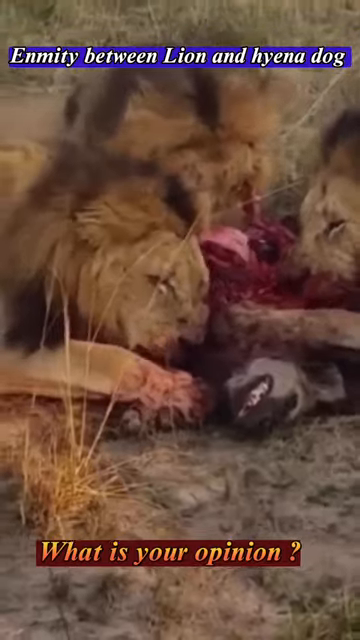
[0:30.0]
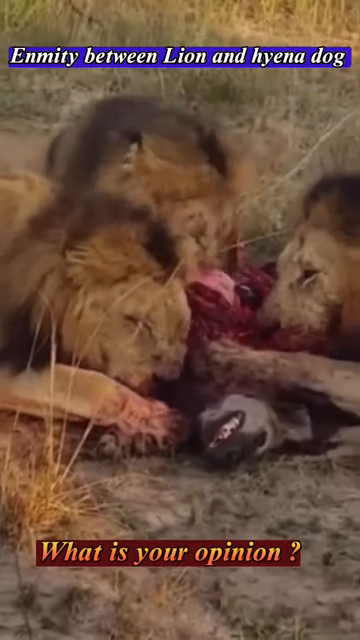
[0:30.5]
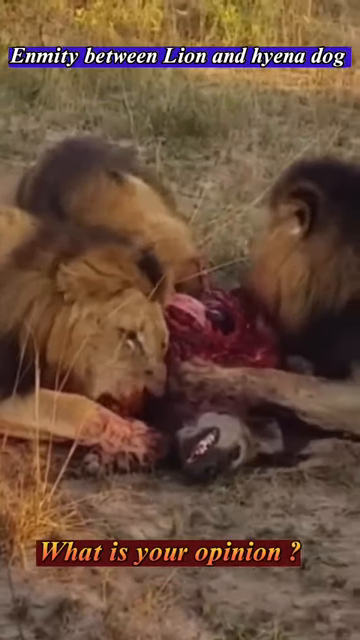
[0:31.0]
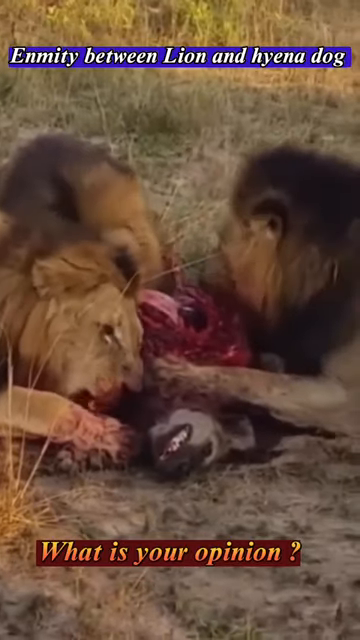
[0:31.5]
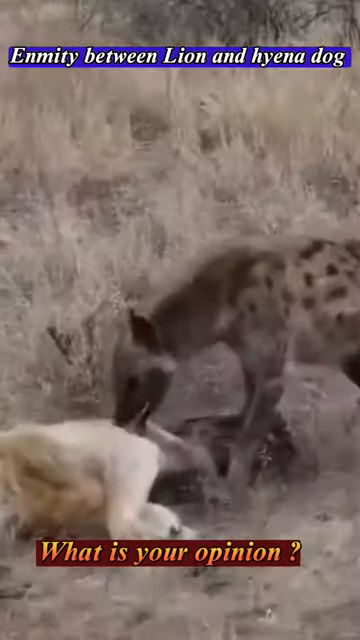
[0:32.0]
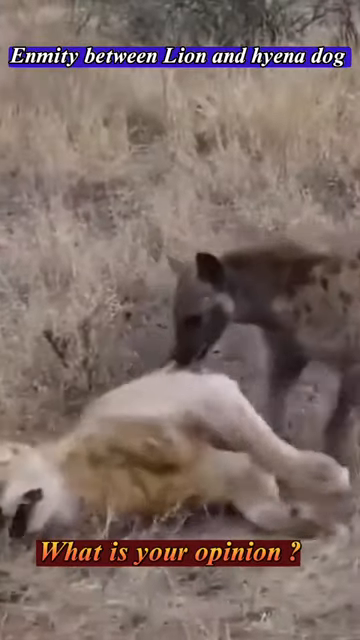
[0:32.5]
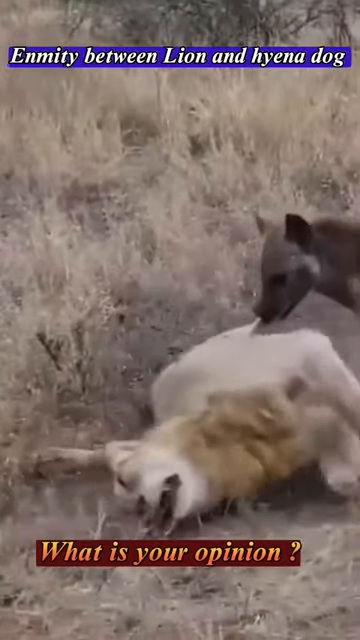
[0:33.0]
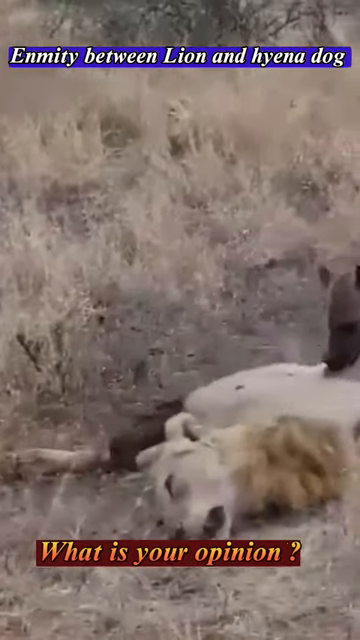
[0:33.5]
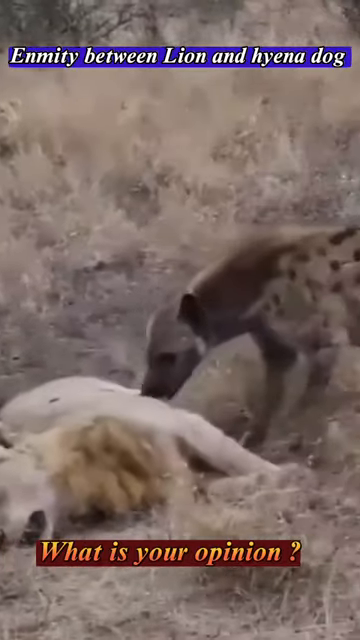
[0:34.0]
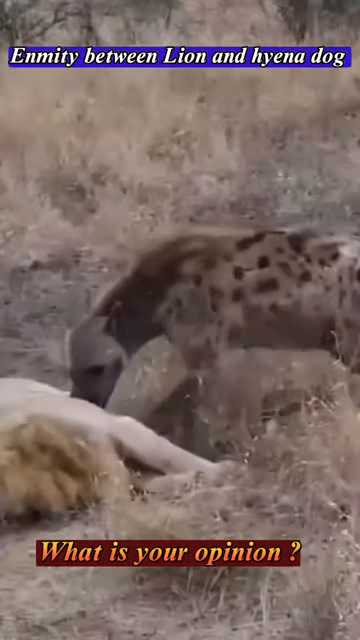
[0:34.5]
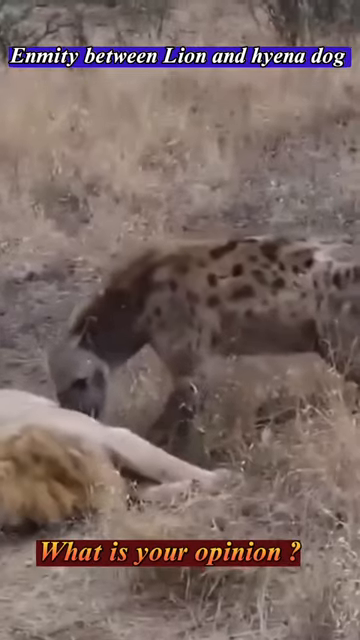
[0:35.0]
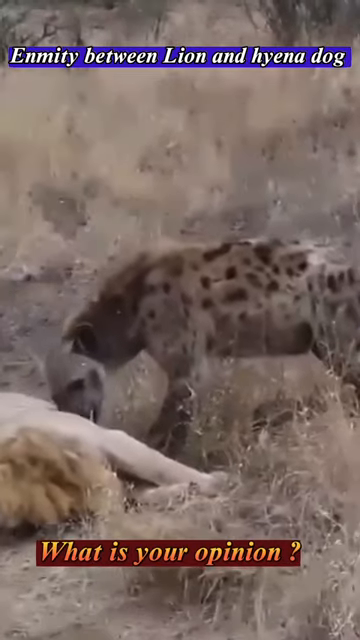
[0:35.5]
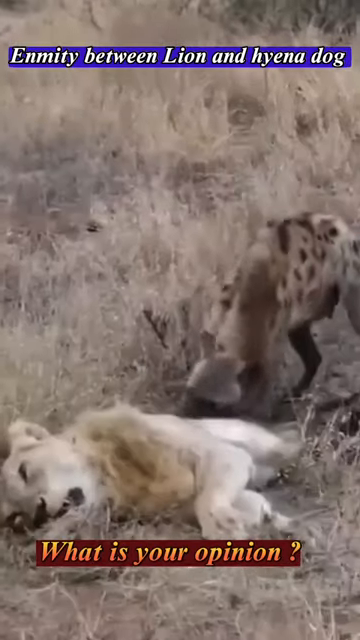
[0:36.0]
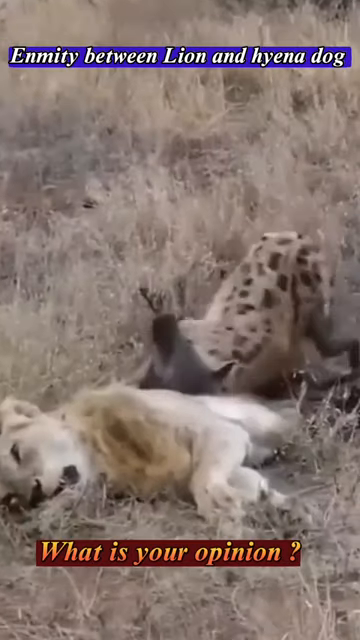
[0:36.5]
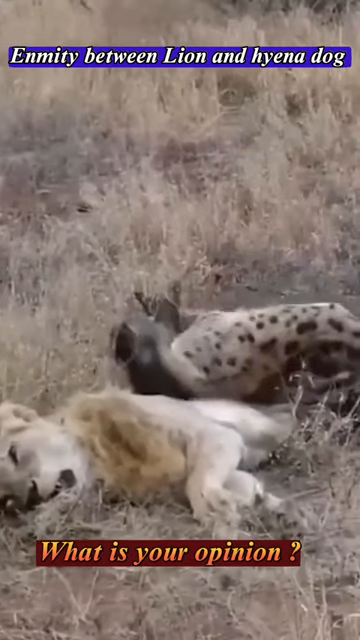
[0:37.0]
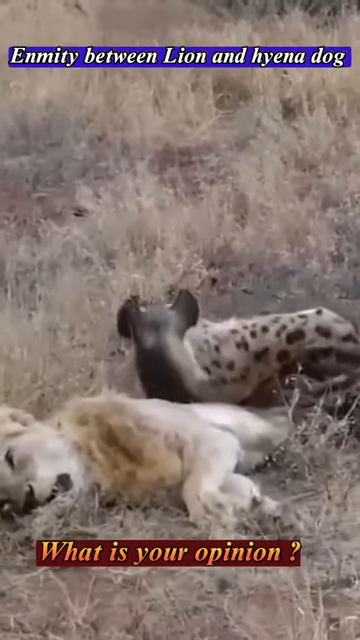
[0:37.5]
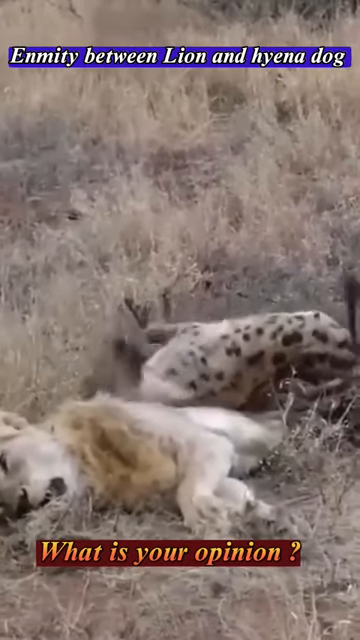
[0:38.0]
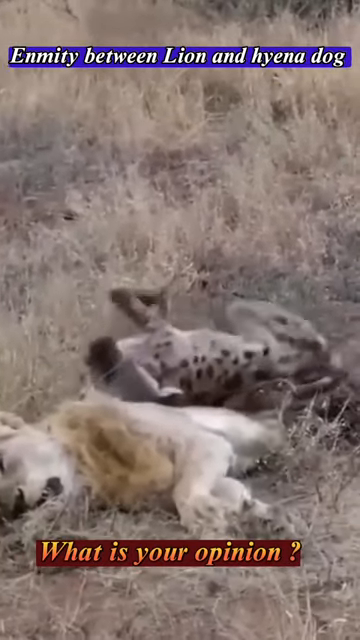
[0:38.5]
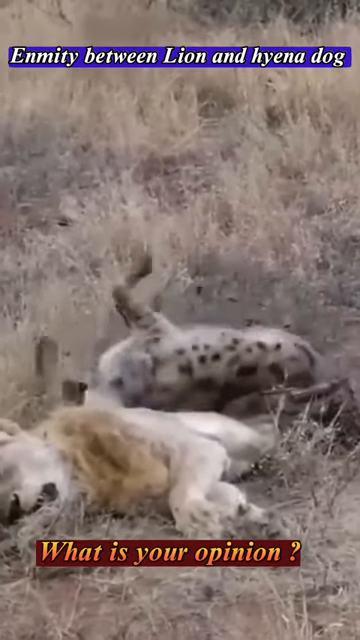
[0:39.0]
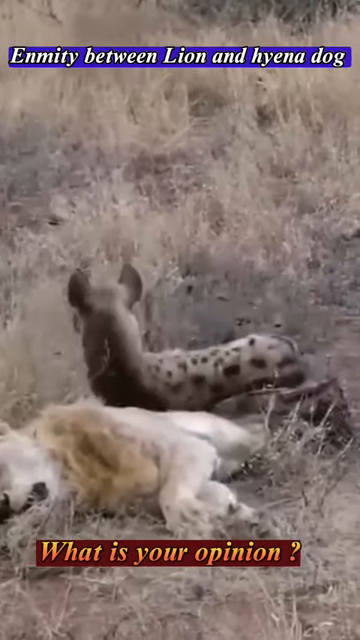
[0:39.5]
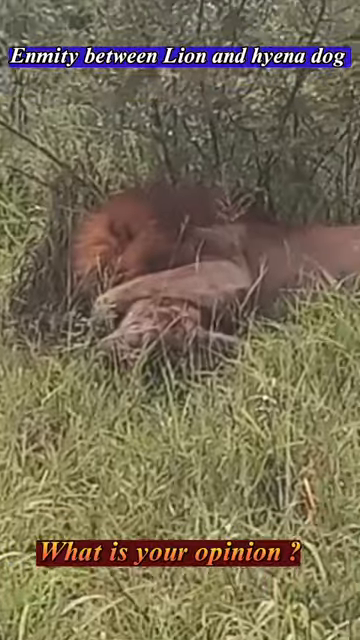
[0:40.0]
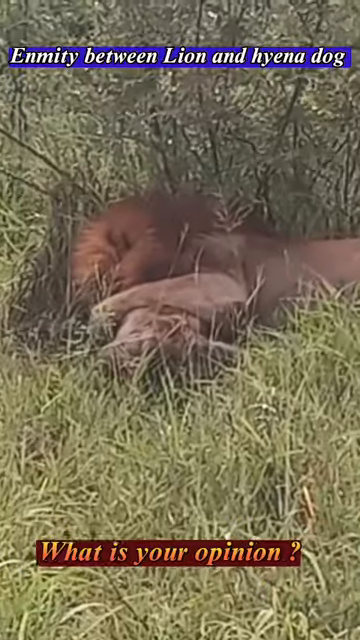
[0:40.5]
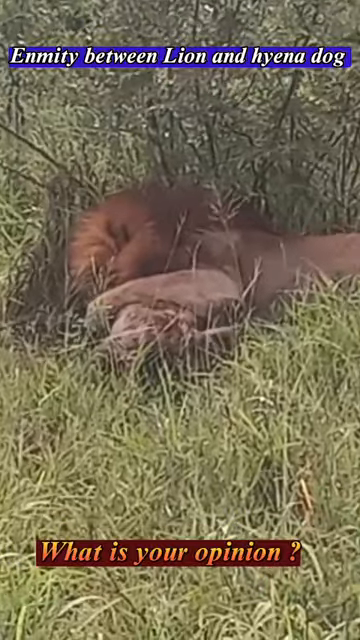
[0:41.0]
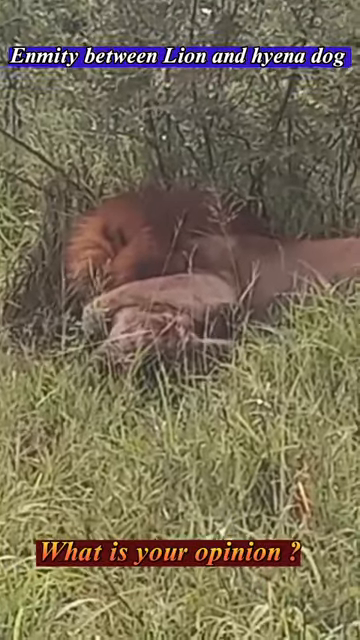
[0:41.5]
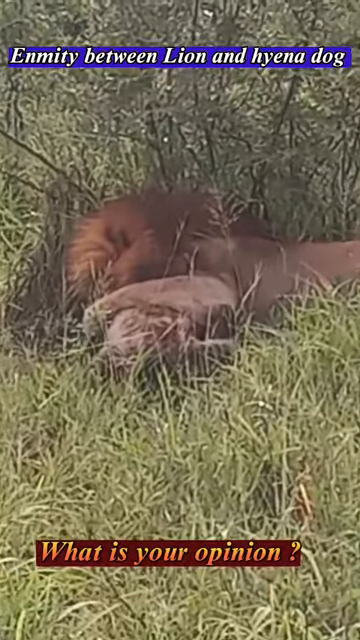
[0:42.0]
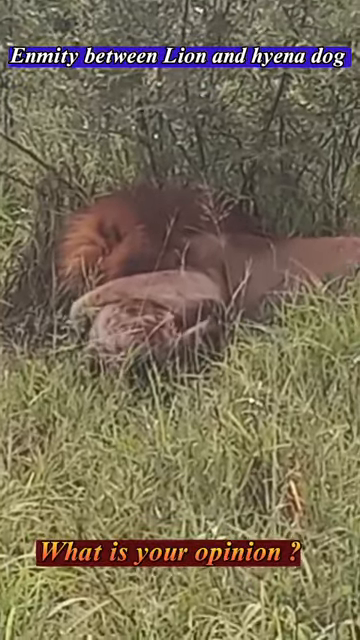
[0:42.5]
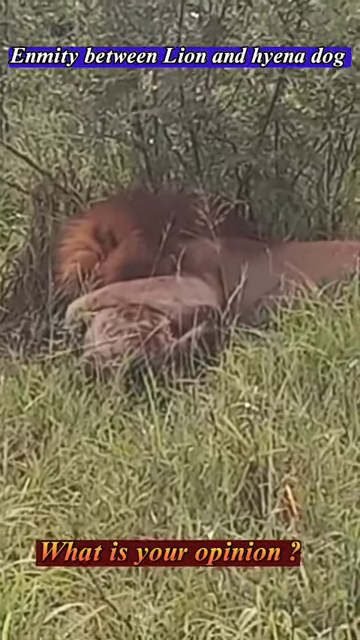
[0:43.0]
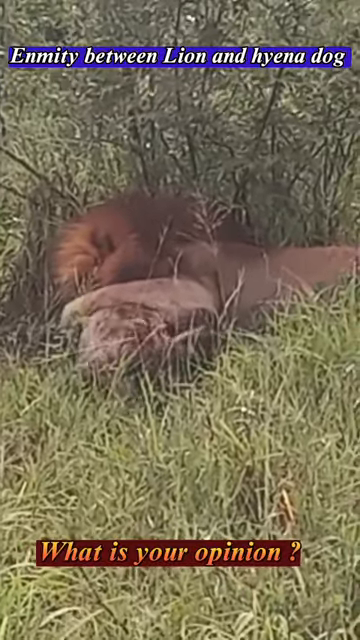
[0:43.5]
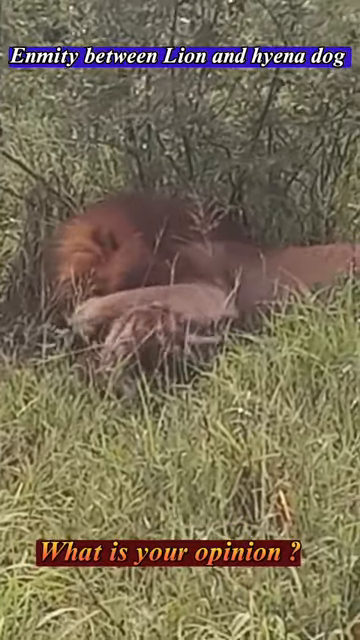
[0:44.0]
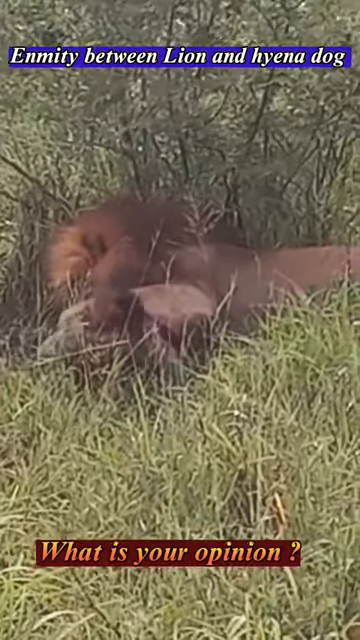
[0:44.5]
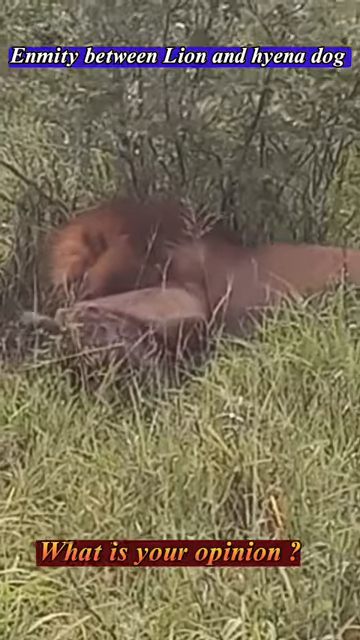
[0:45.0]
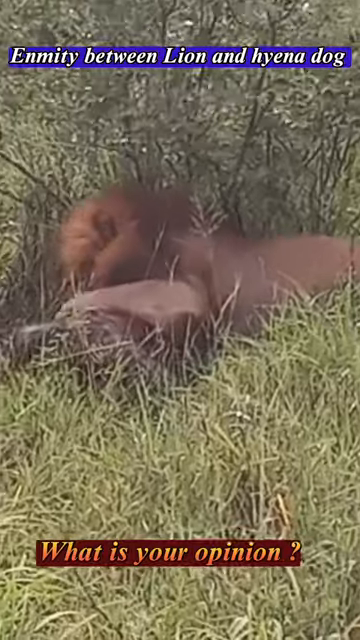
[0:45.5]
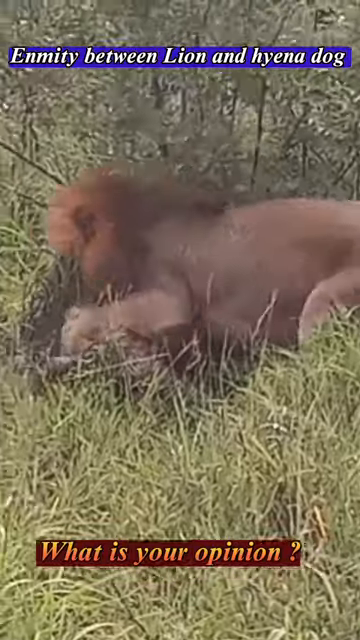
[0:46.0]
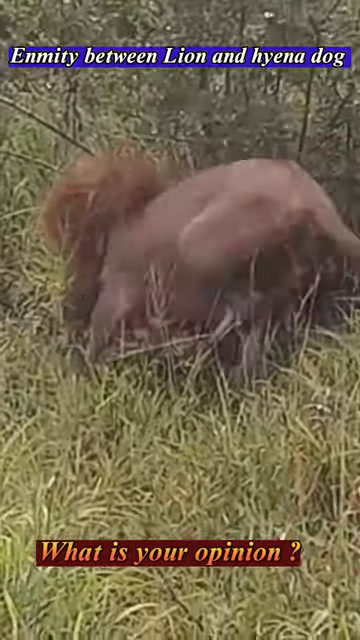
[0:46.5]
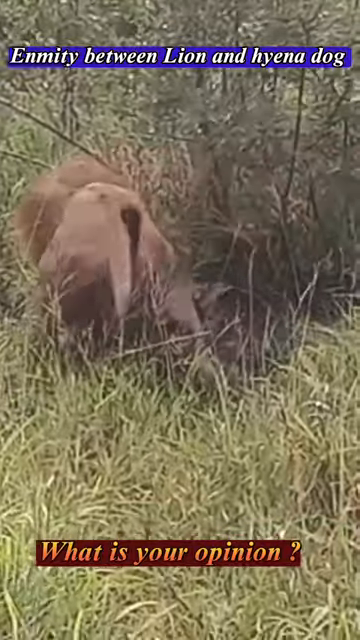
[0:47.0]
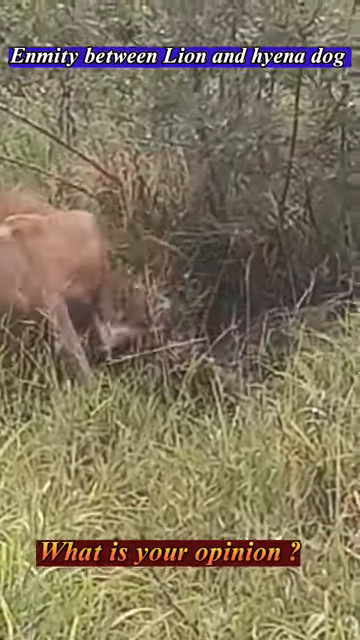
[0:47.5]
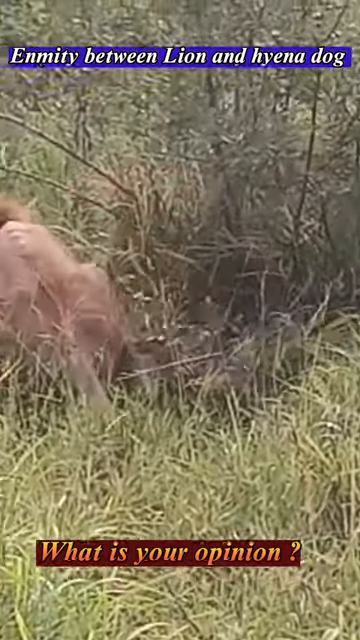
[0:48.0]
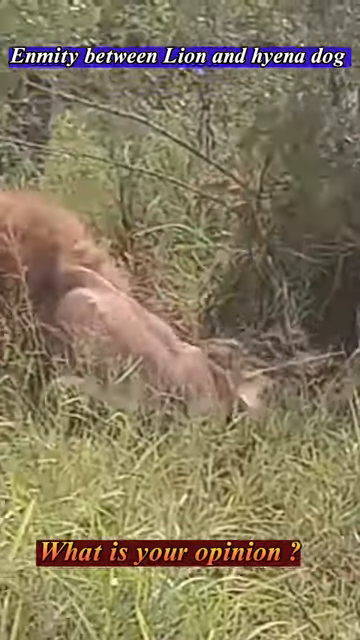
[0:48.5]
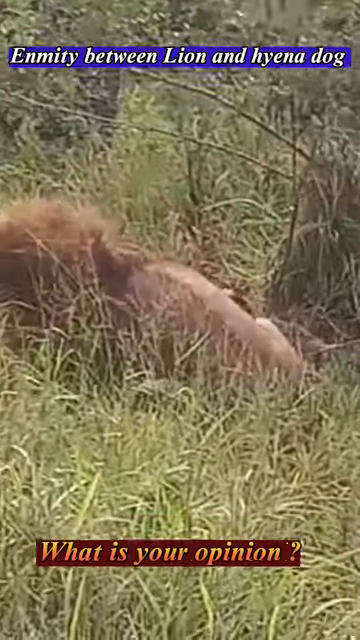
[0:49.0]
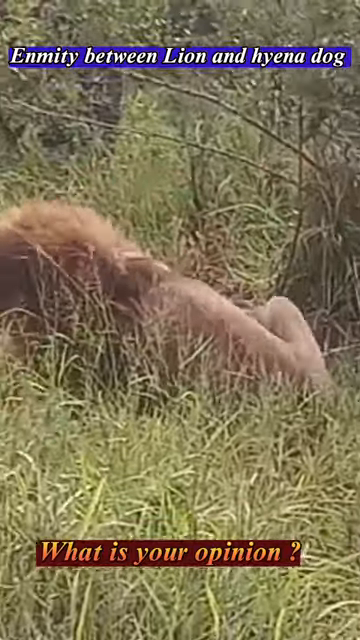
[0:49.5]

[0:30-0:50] The same captions stay on screen at the top and bottom. The lions continue to eat the hyena. The next video shows a hyena that has attacked a lion, dragging it away. The hyena looks very happy and rolls on its backside behind the lion. Another video shows what looks like two lions in some shade surrounded by grass; they seem to be struggling, maybe attacking each other. The hyena's back is shown while it eats and attacks one of the lions, revealing spots and different markings on its back.